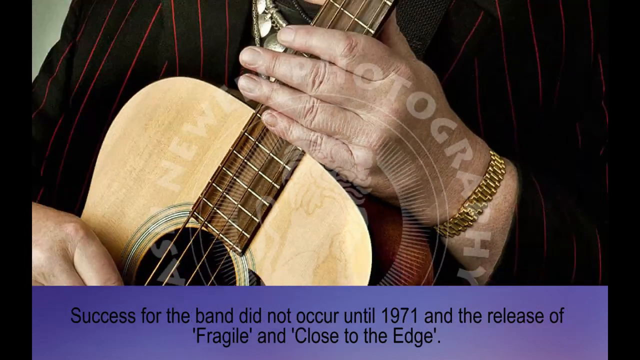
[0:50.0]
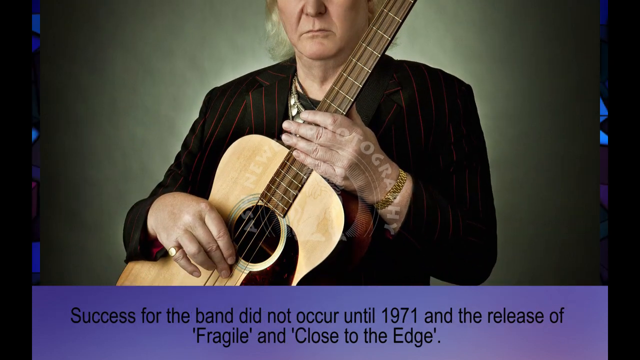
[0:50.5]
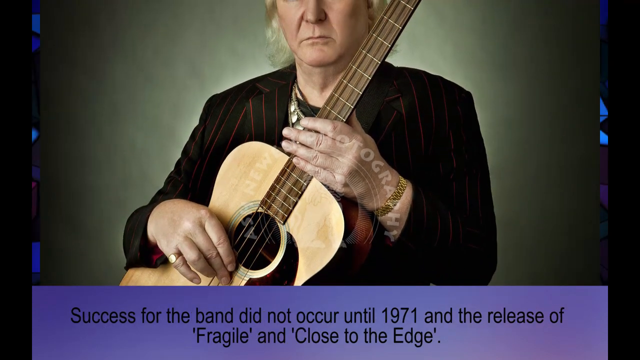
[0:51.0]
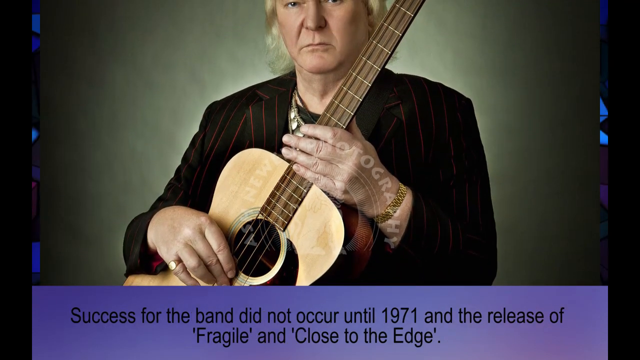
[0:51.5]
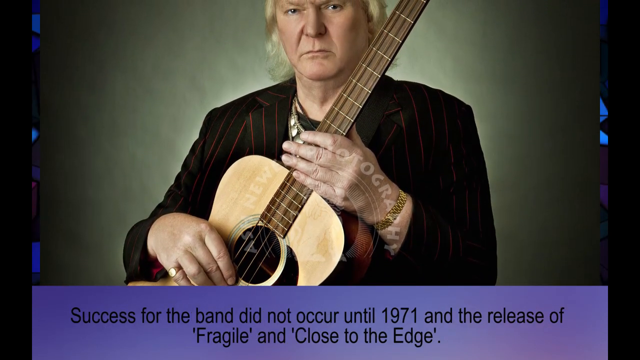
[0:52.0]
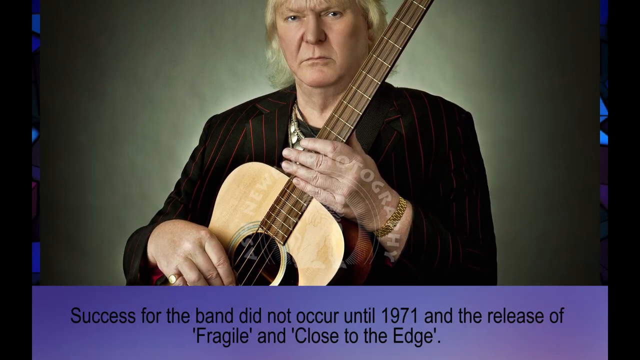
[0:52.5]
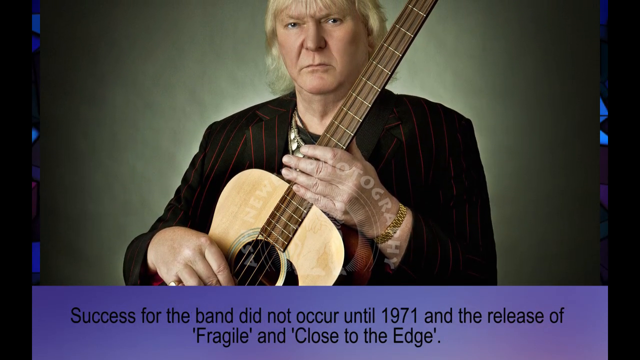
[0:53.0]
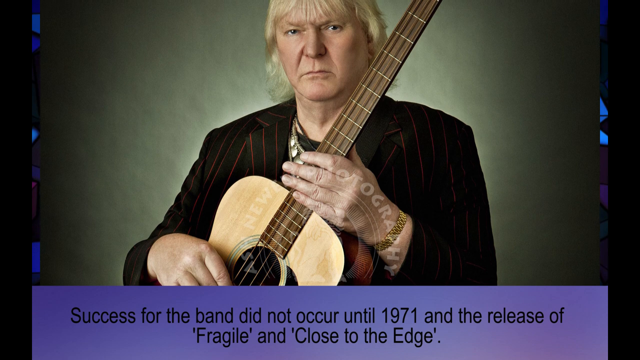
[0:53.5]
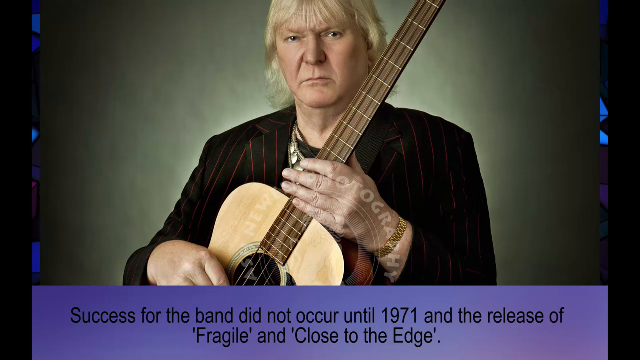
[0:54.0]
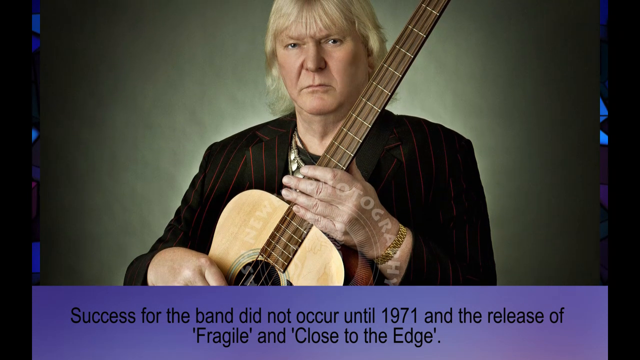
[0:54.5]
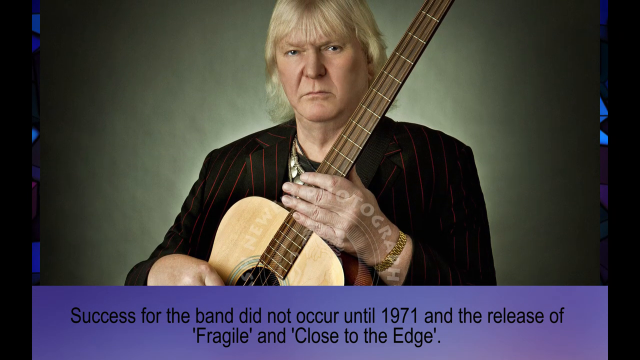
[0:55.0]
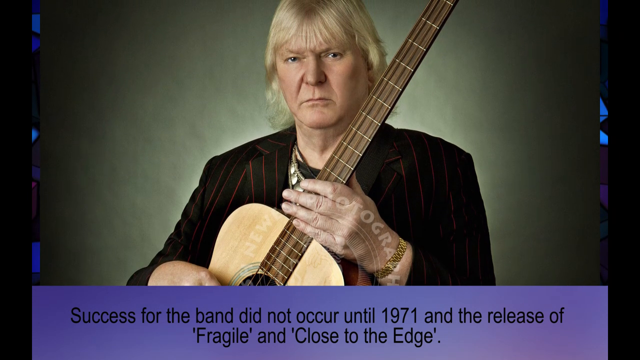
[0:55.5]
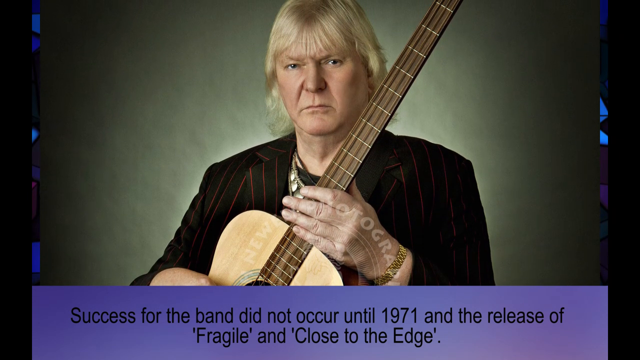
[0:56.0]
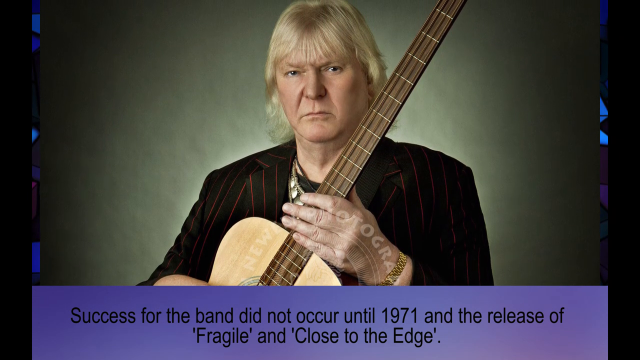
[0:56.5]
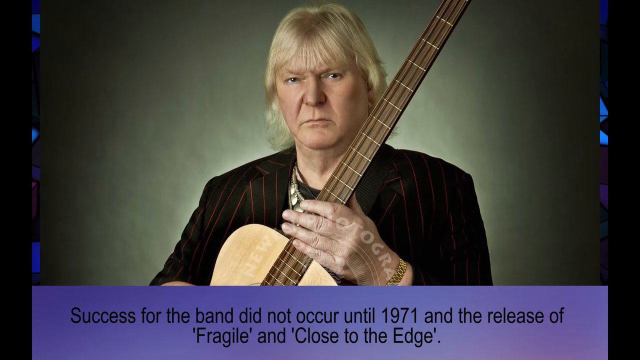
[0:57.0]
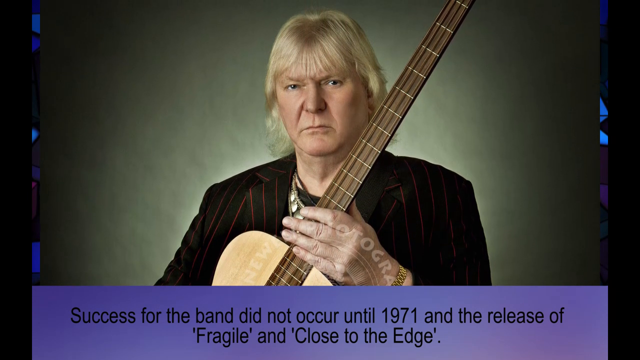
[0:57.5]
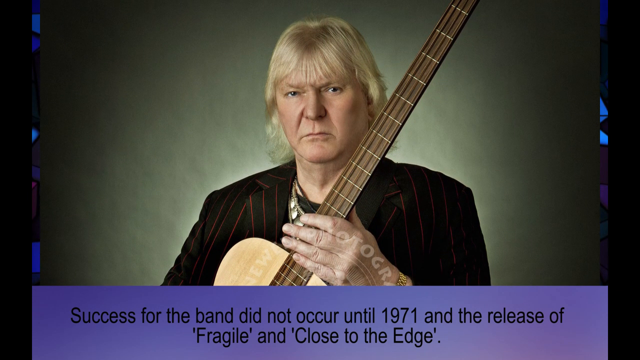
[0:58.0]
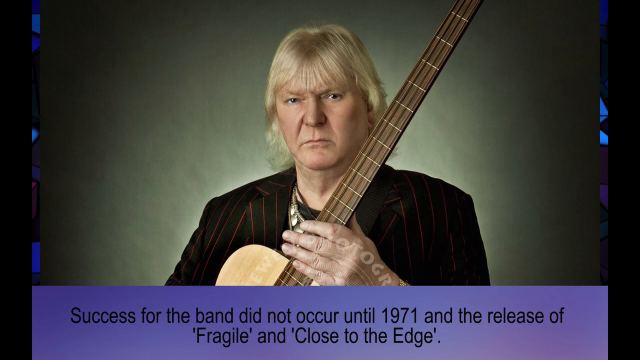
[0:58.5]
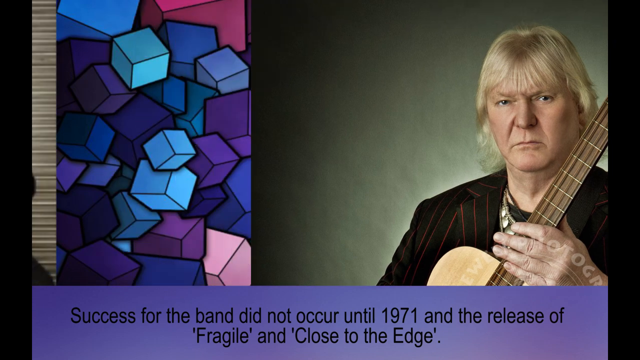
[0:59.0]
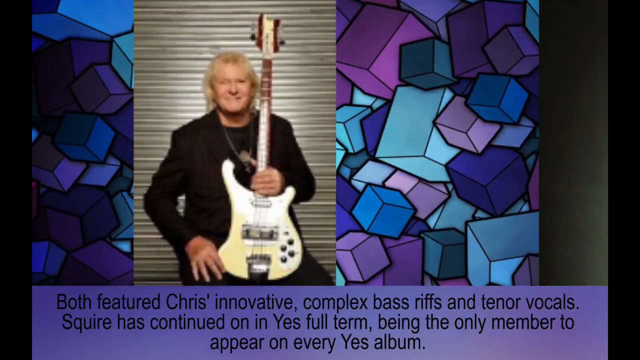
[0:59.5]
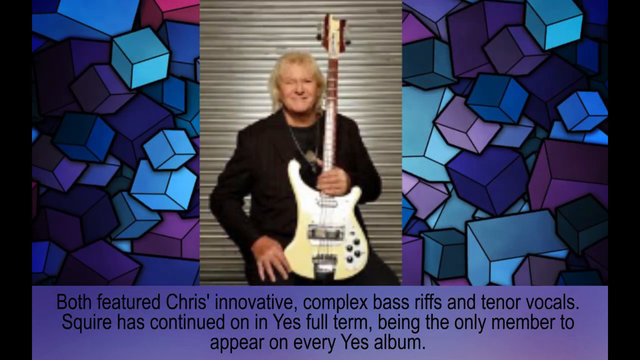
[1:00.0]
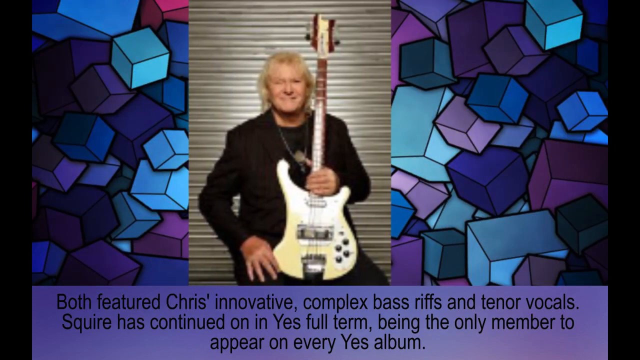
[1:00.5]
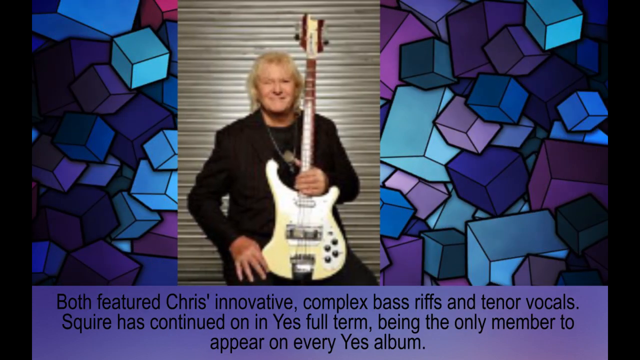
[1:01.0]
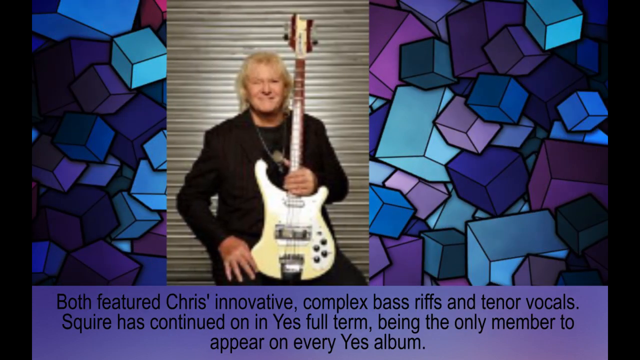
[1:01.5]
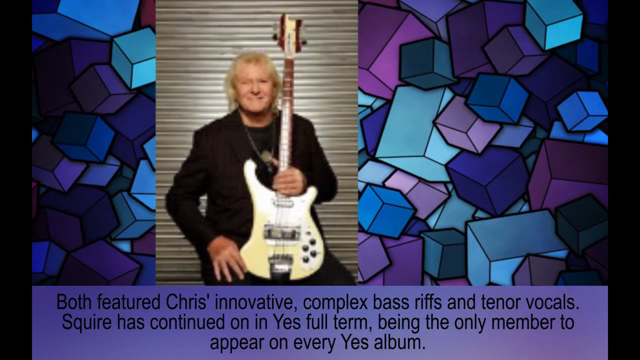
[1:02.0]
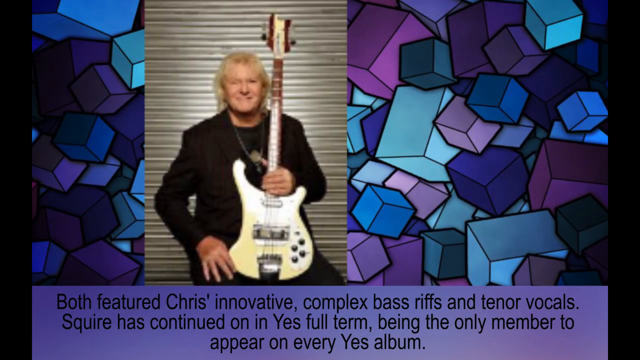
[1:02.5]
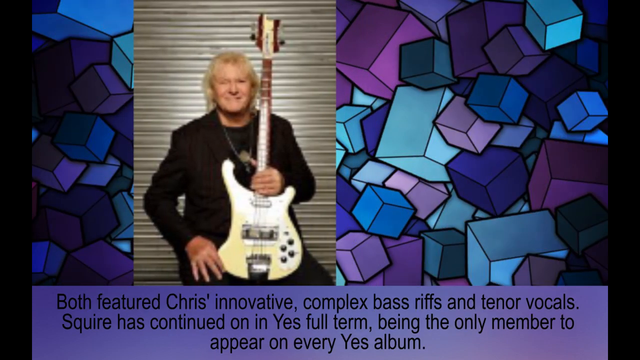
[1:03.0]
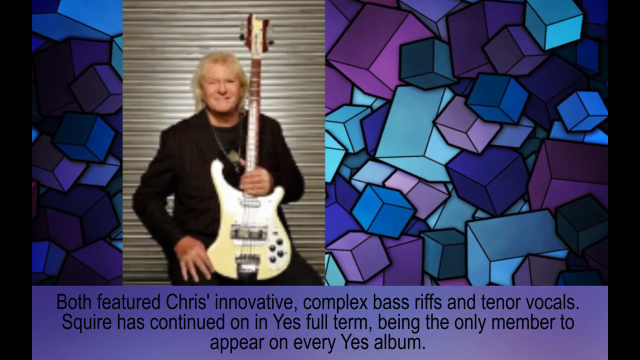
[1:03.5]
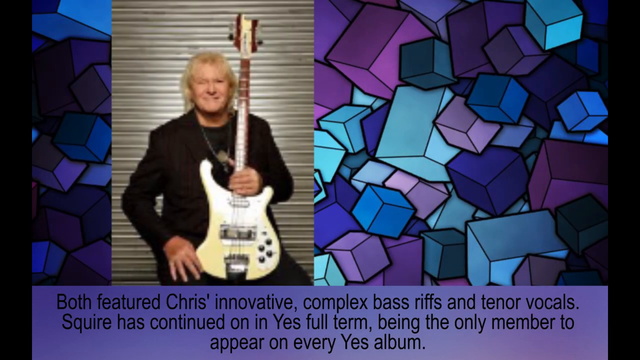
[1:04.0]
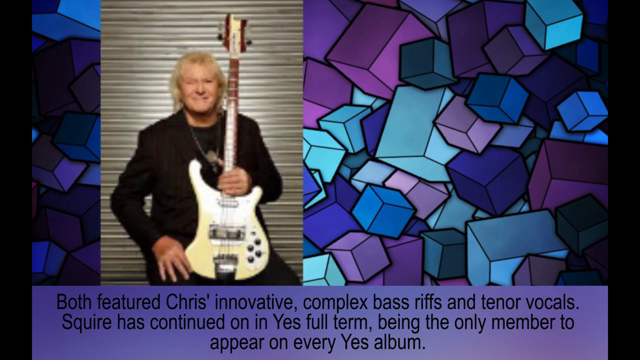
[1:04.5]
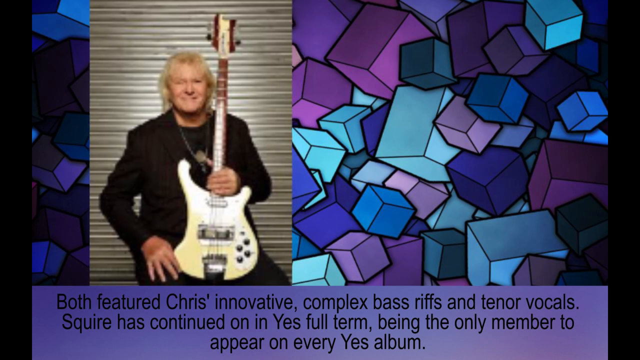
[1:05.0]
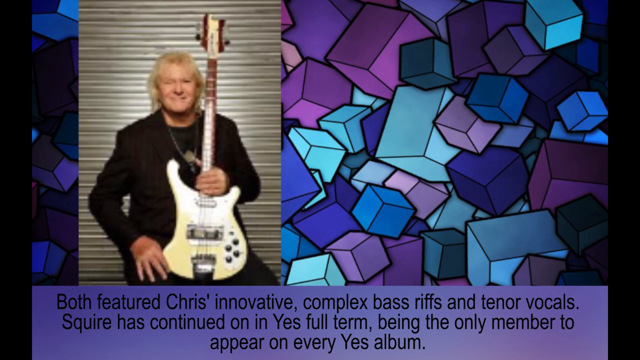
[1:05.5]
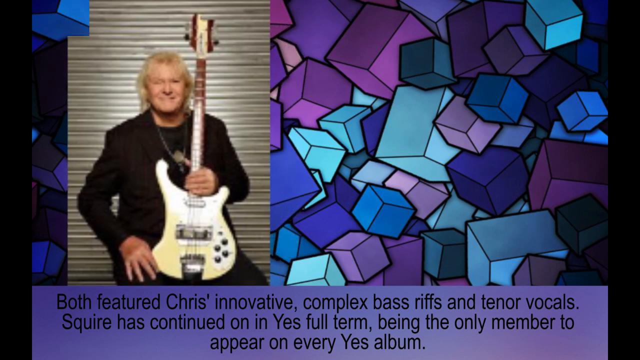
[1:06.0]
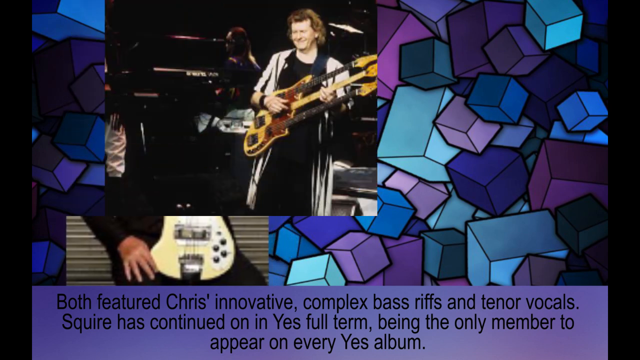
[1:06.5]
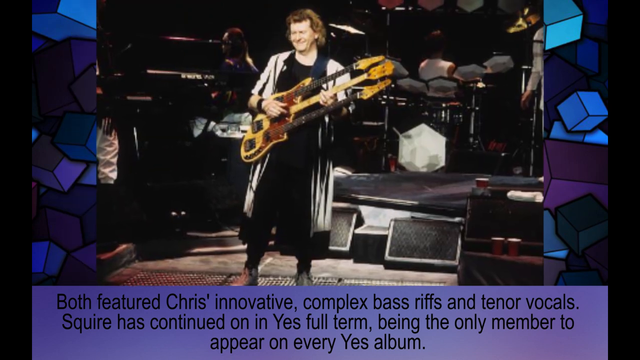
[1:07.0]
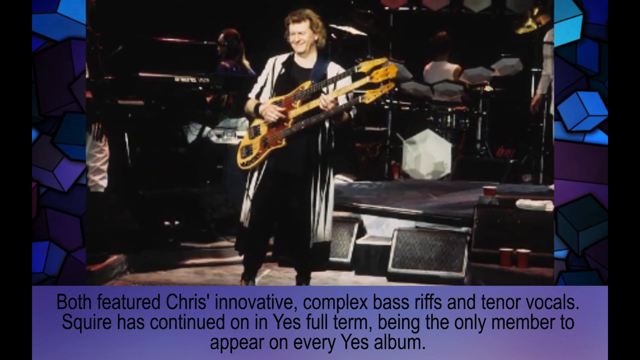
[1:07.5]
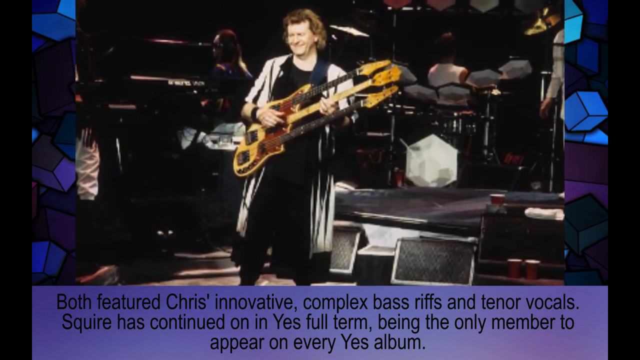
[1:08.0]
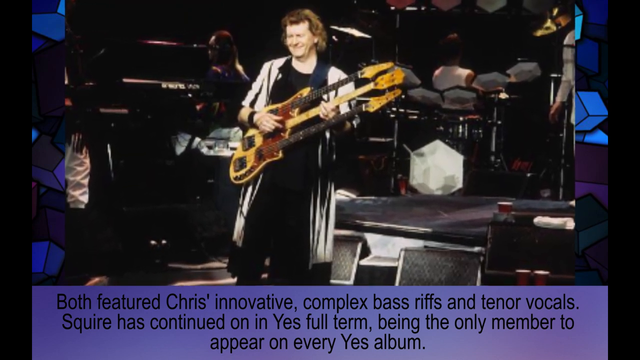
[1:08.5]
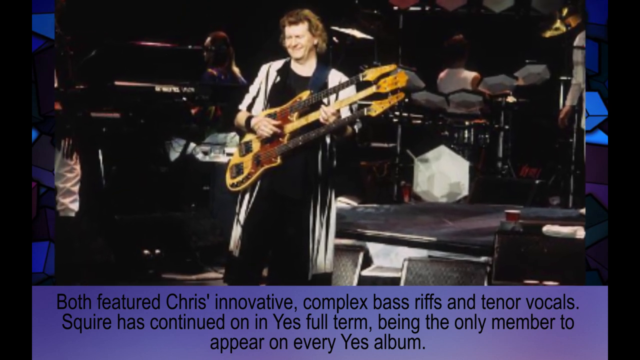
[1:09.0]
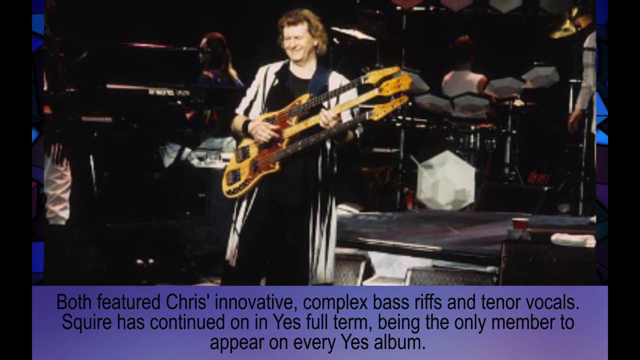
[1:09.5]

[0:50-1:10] Text at the bottom of the screen reads: "success for the band did not occur until 1971, and the release of" two albums. The image shows a hand holding a guitar, apparently an acoustic guitar, and the view widens out to show the full image of the person holding it, Chris of the band Yes. Text at the bottom then reads: "both featured Chris' innovative, complex bass riffs and tenor vocals. Squire has continued on in Yes full-term, being the only member to appear on every Yes album."